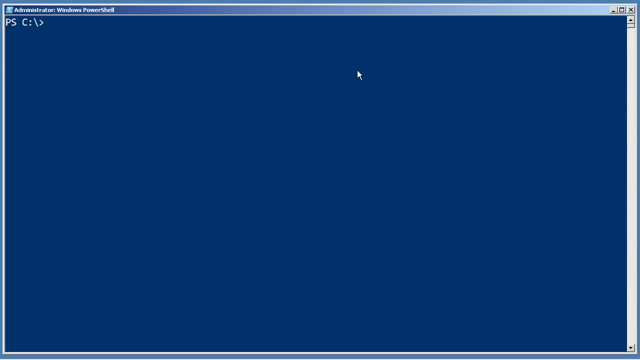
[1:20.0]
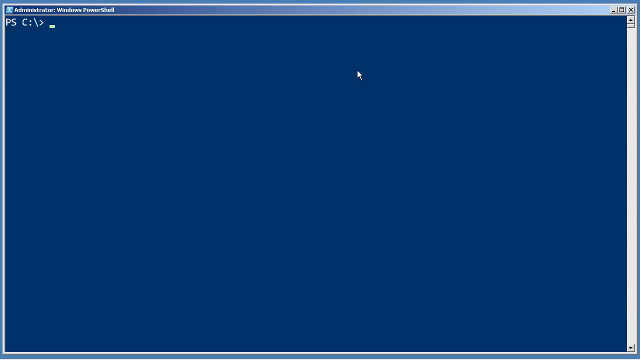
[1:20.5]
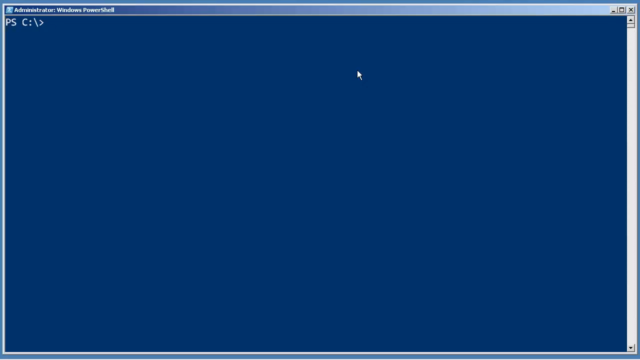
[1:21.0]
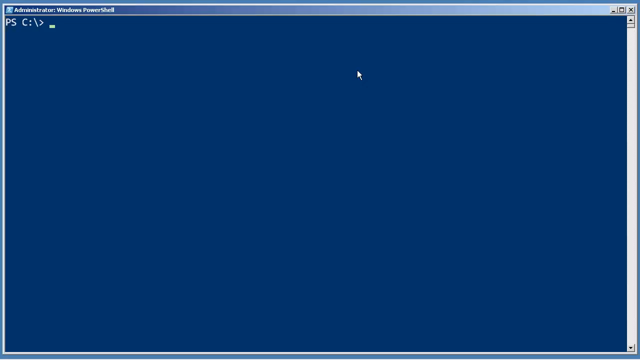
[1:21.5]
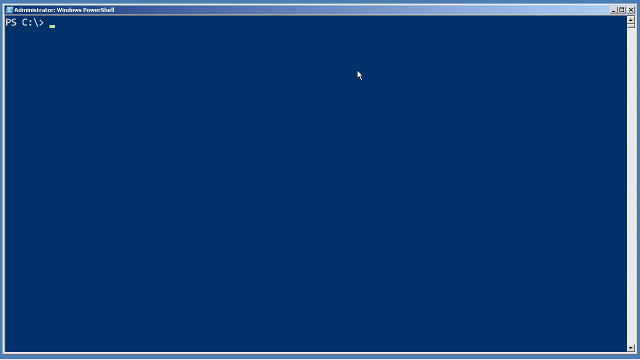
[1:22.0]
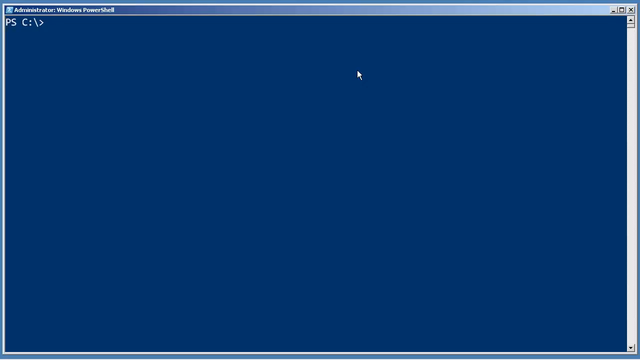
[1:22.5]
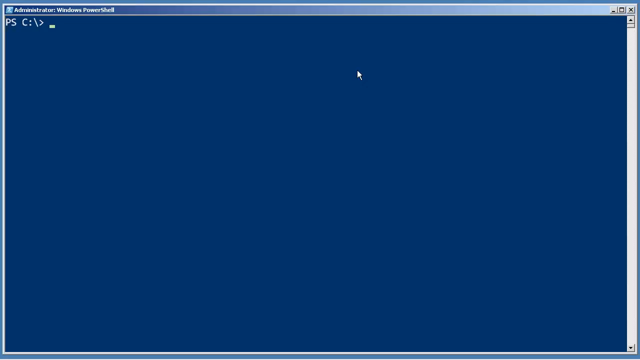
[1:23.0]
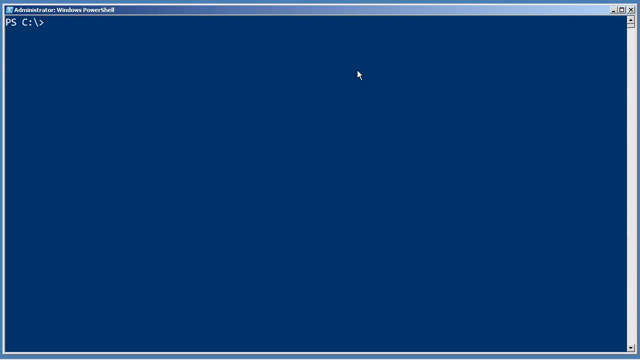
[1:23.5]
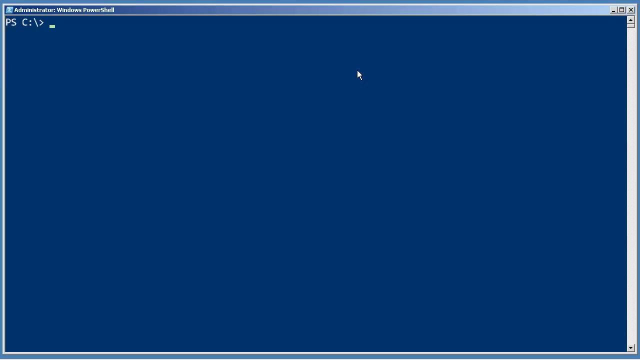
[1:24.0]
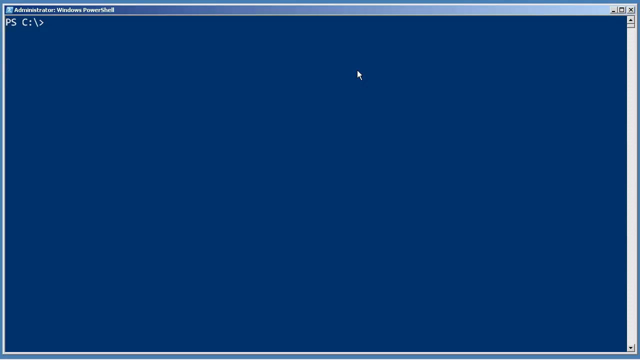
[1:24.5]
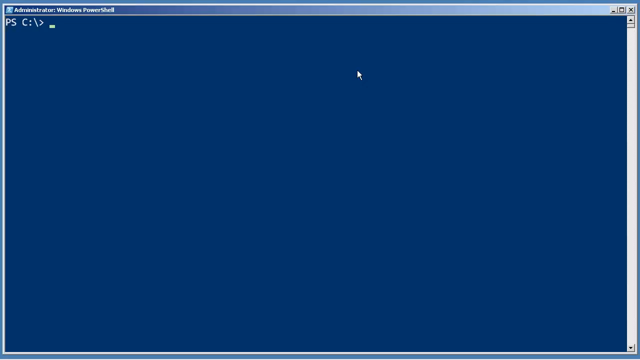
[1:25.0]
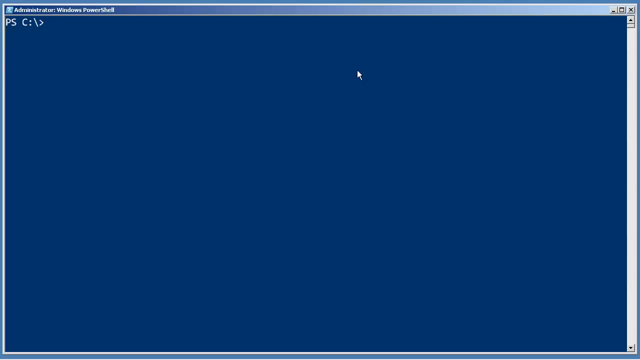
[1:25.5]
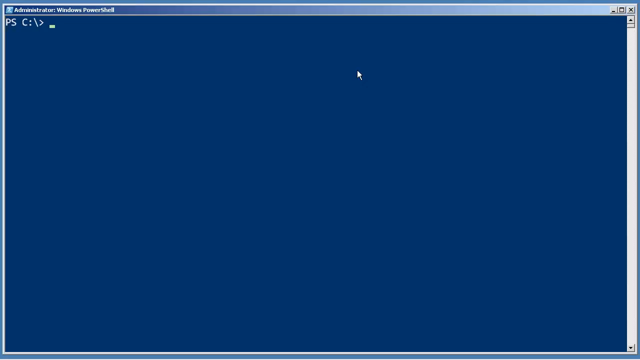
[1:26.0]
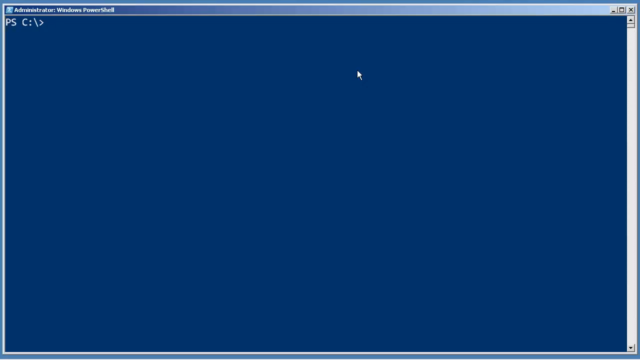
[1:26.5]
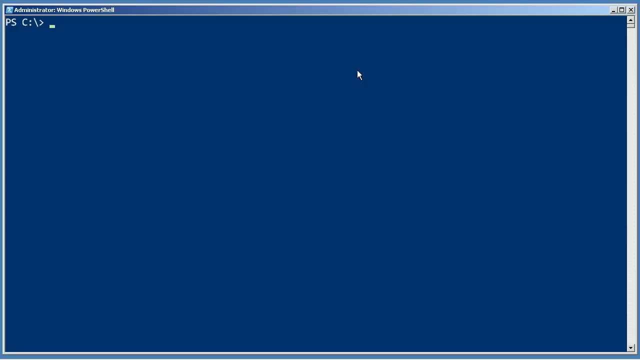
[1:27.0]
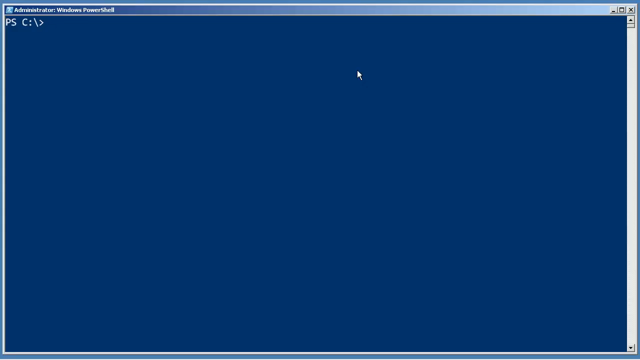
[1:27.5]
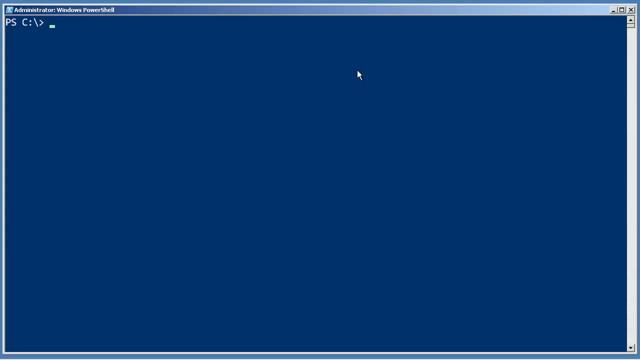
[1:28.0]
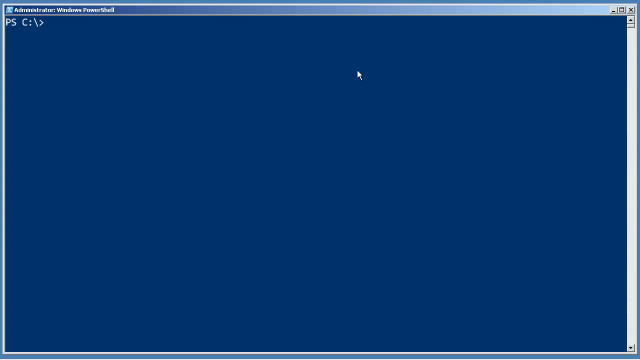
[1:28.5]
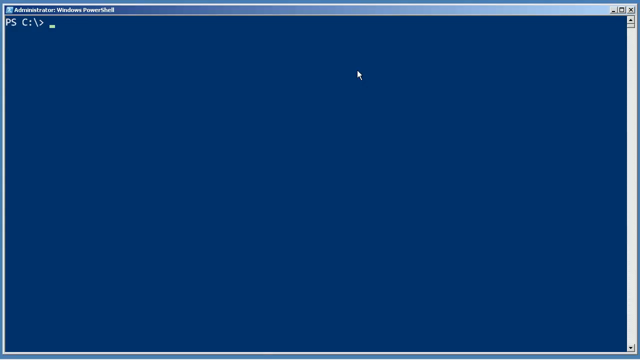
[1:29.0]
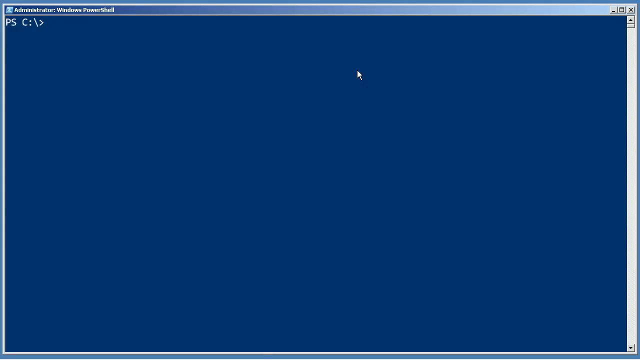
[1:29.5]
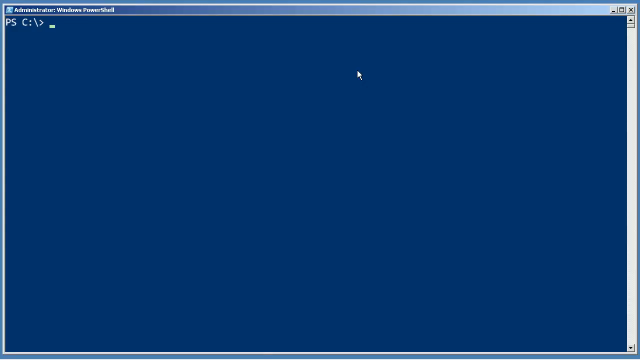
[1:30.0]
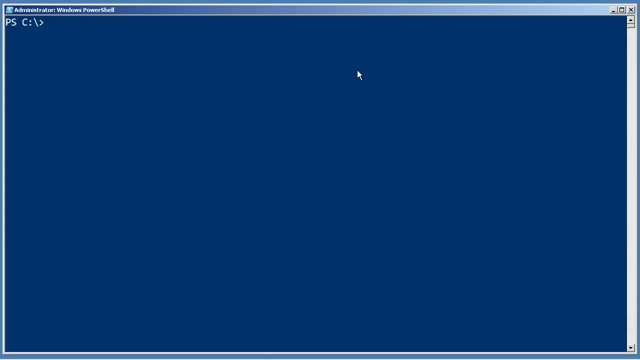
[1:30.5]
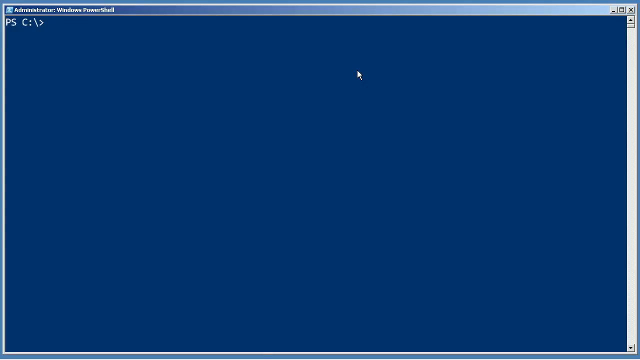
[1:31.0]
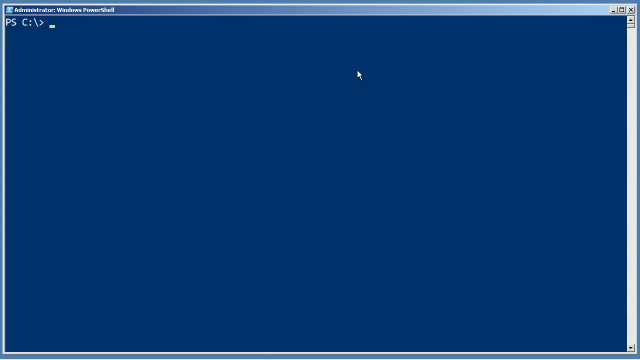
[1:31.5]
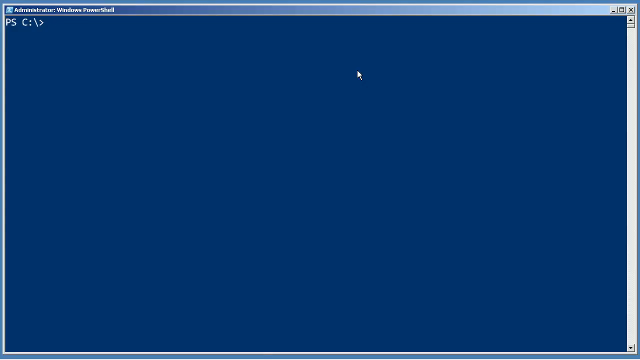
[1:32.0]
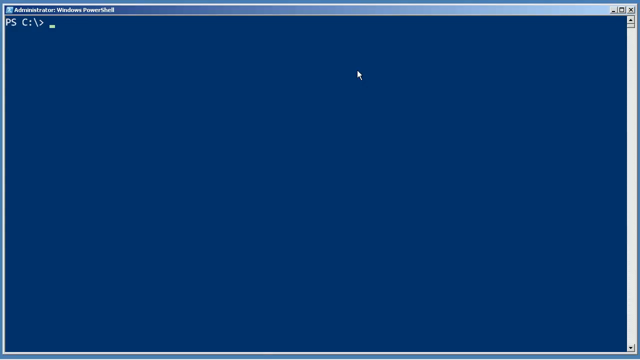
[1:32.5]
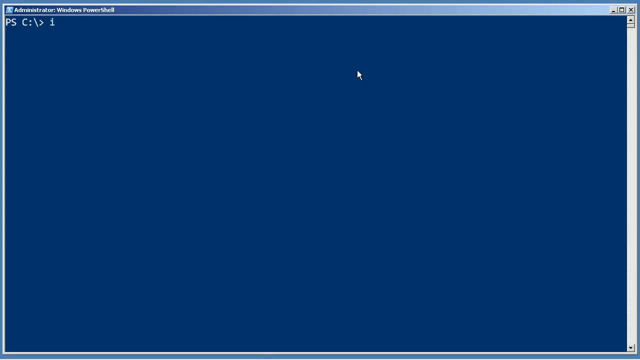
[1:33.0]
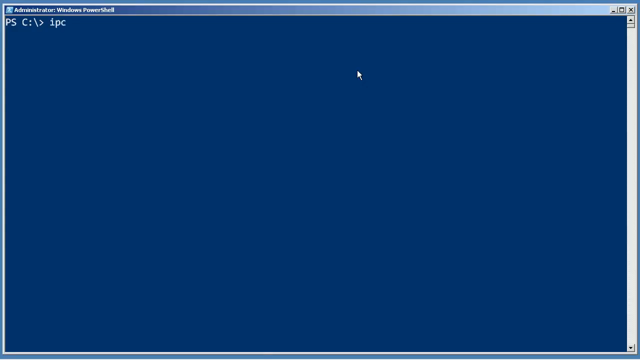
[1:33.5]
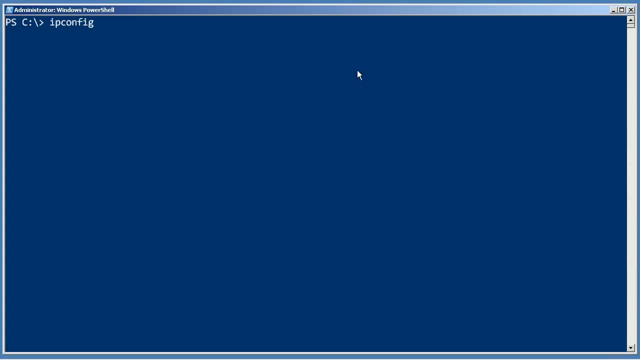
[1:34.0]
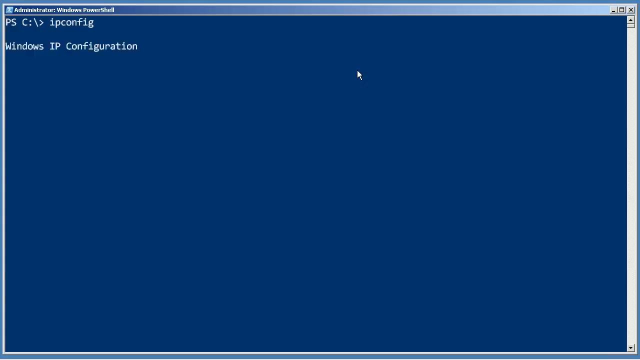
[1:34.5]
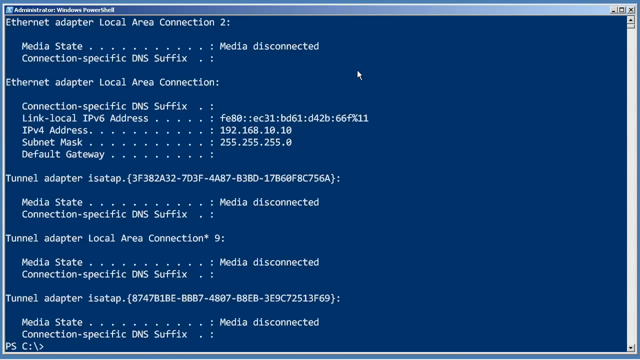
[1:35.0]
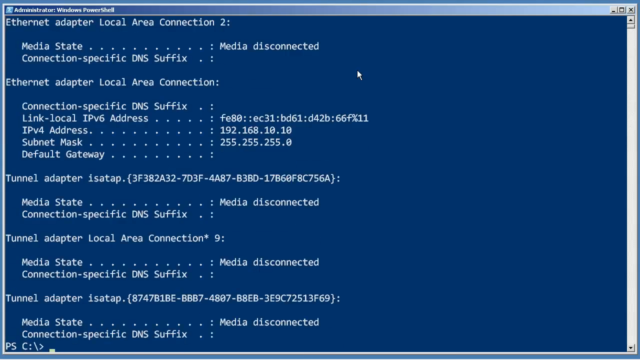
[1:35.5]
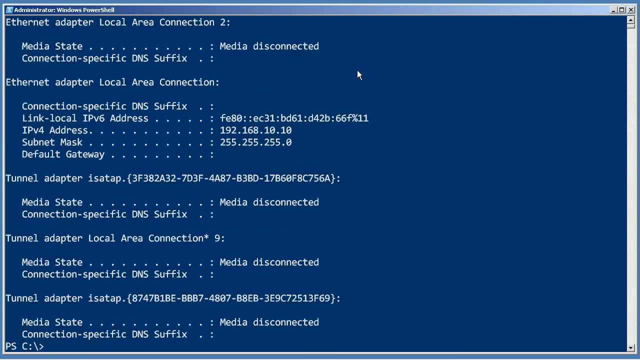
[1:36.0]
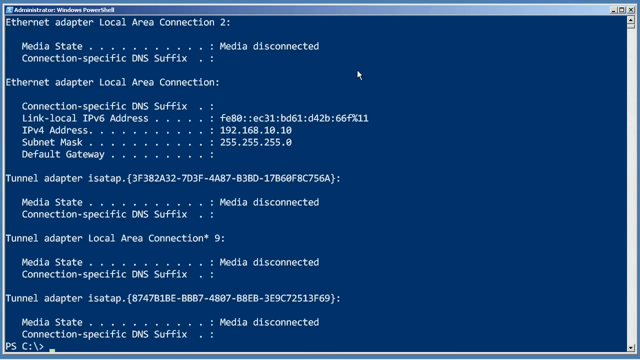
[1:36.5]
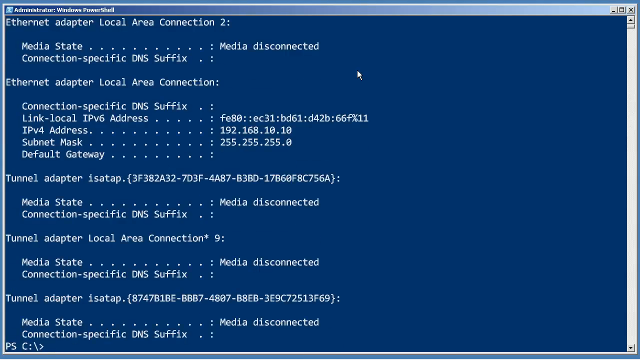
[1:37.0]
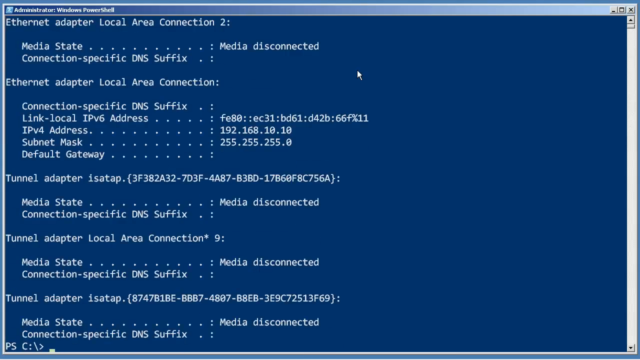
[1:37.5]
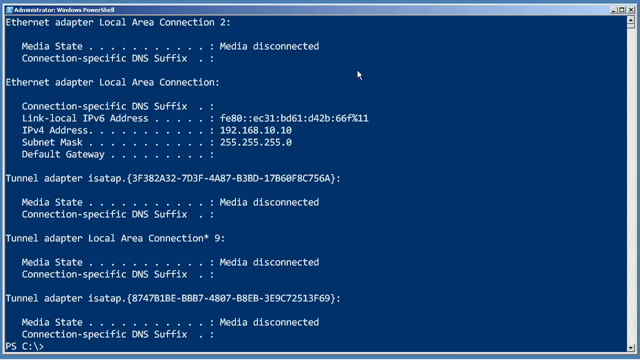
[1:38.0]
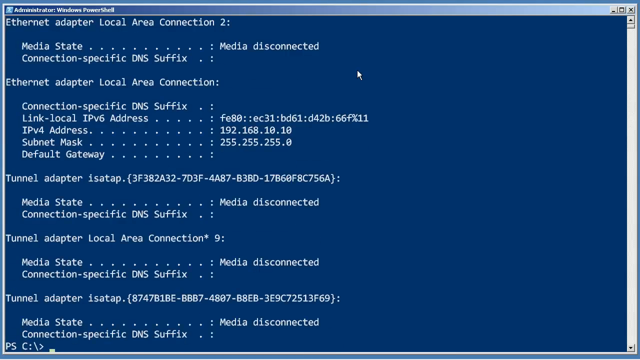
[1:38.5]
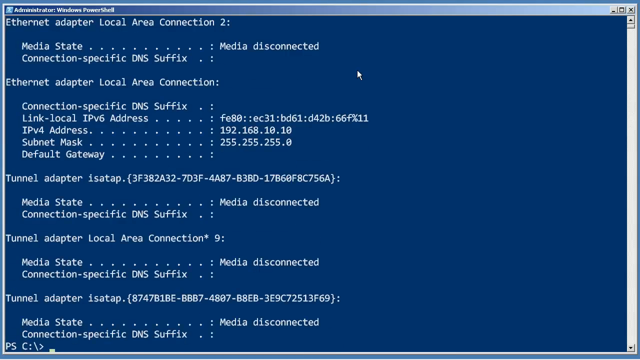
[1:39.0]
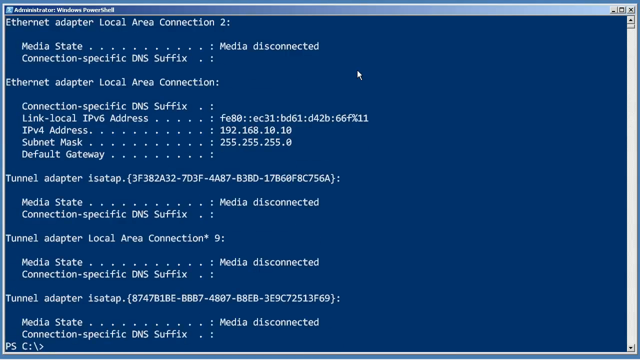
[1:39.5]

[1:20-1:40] The typing cursor blinks in the top left-hand corner of the screen, while the mouse cursor remains still near the top, a couple of lines down, near the center of the screen. The user types in ipconfig and runs it, and many lines of text appear on the screen. The first line reads "Ethernet adapter local area connection 2", and many dots, numbers and letters follow line by line. It seems the user has brought up the IP configuration of the computer in Windows PowerShell. Under the line "IPv4 address", followed by multiple dots and a colon, the IP address "192.168.10.10" is visible.